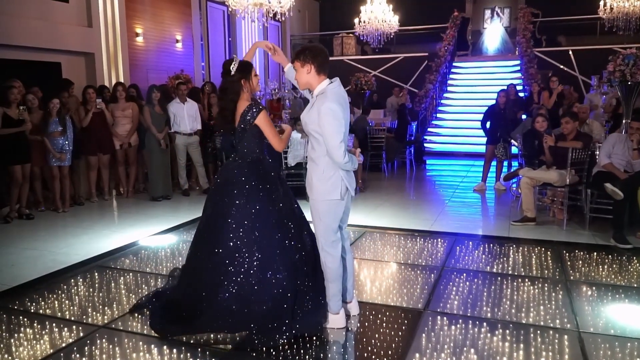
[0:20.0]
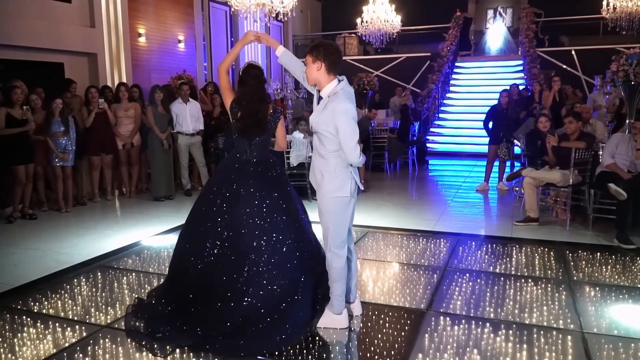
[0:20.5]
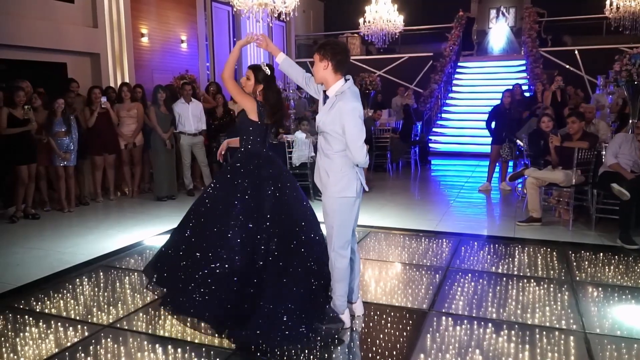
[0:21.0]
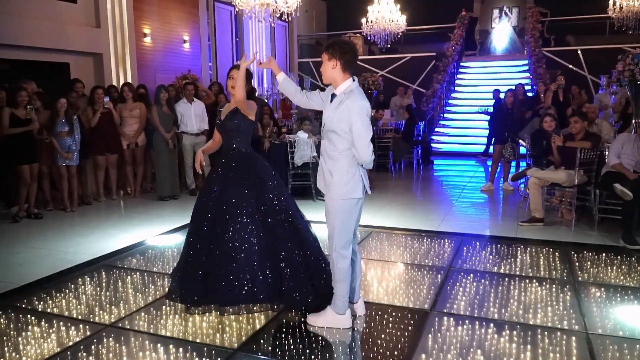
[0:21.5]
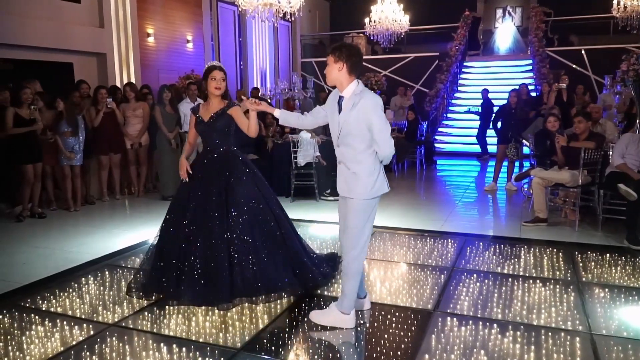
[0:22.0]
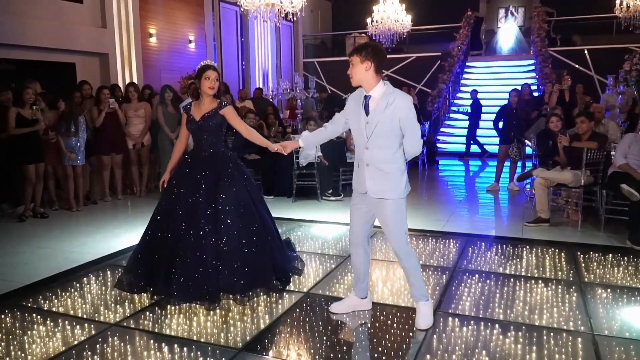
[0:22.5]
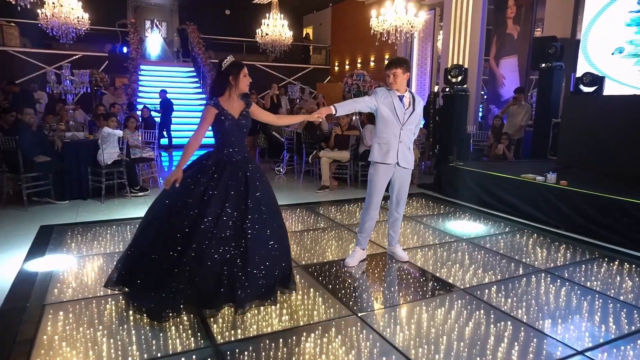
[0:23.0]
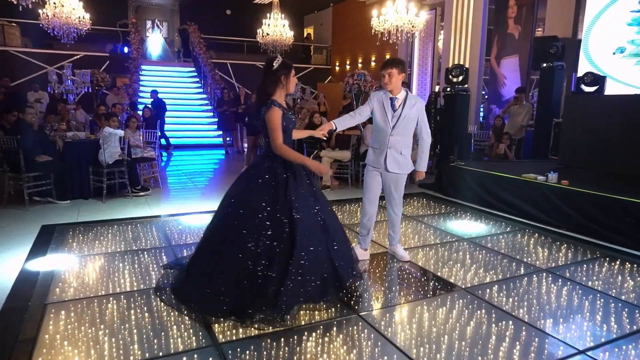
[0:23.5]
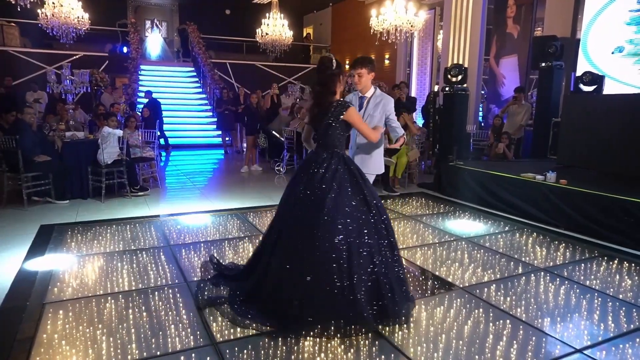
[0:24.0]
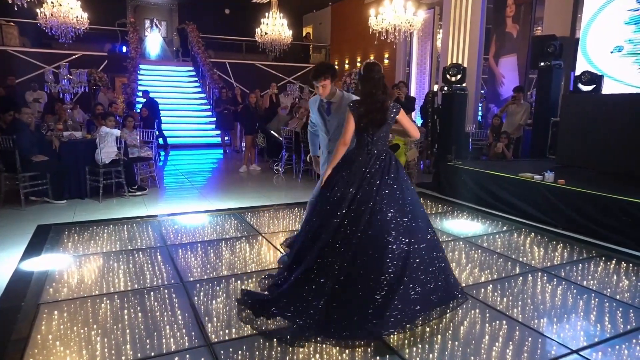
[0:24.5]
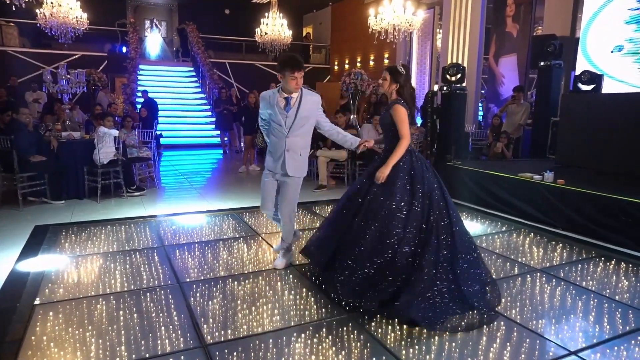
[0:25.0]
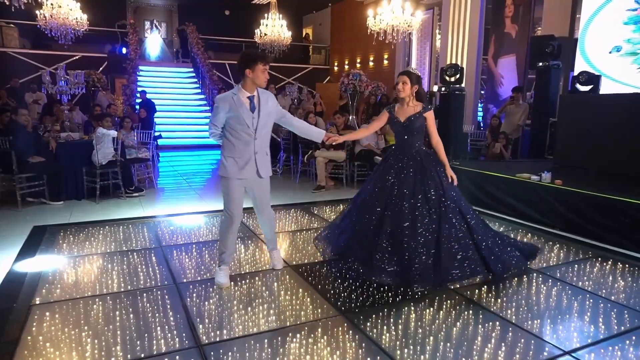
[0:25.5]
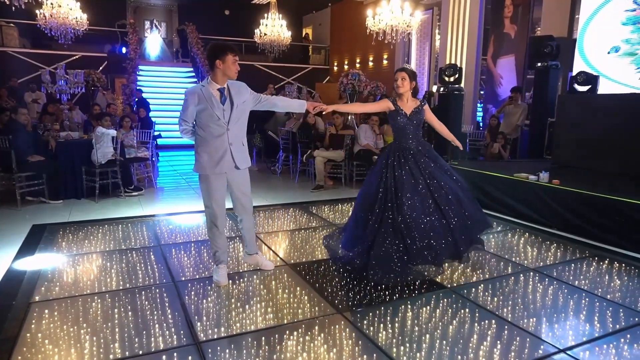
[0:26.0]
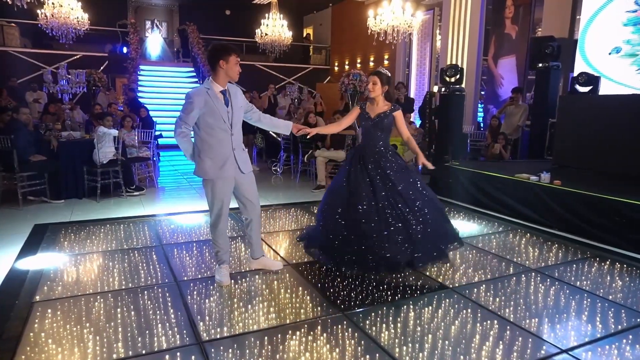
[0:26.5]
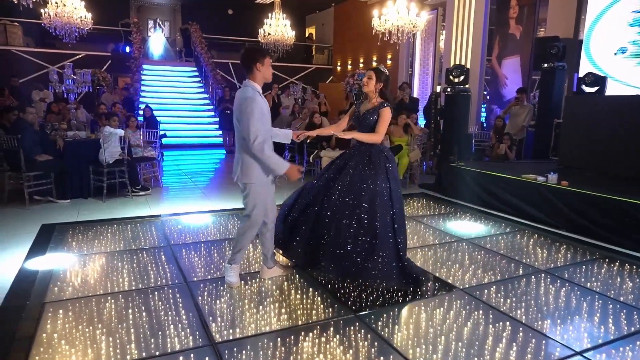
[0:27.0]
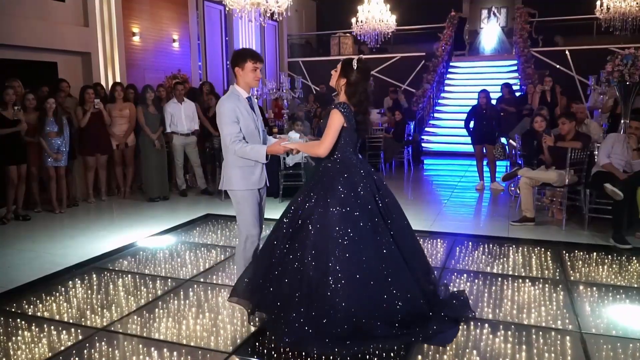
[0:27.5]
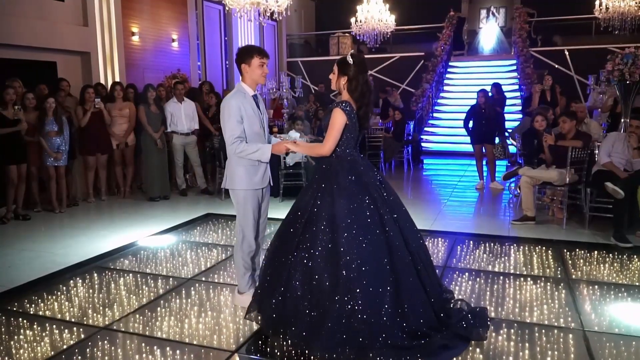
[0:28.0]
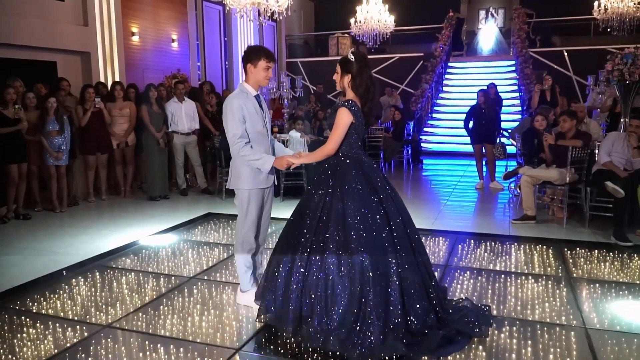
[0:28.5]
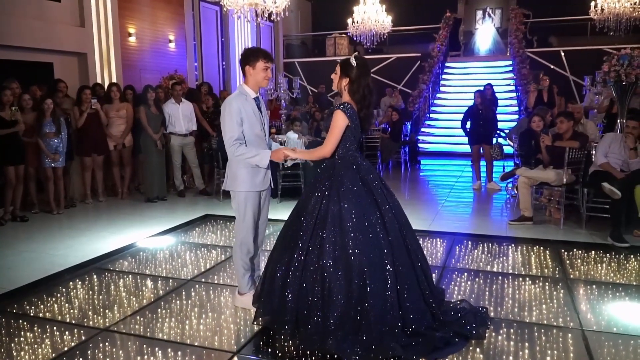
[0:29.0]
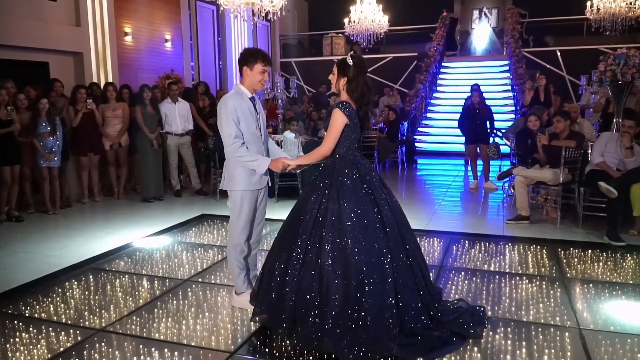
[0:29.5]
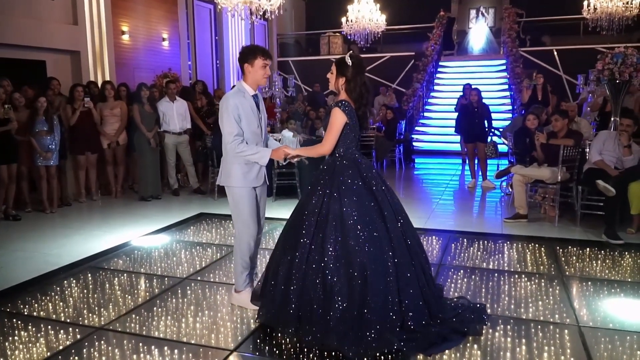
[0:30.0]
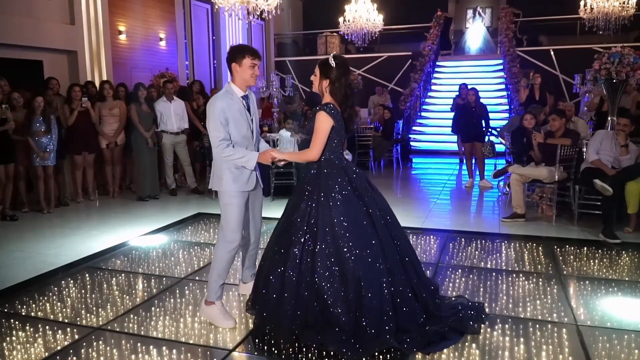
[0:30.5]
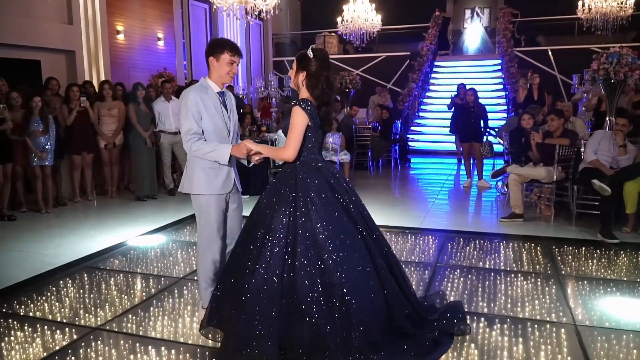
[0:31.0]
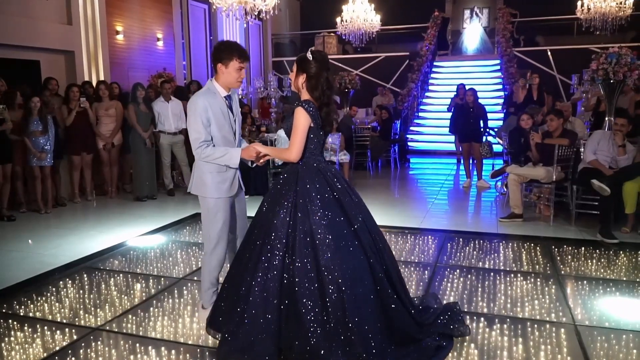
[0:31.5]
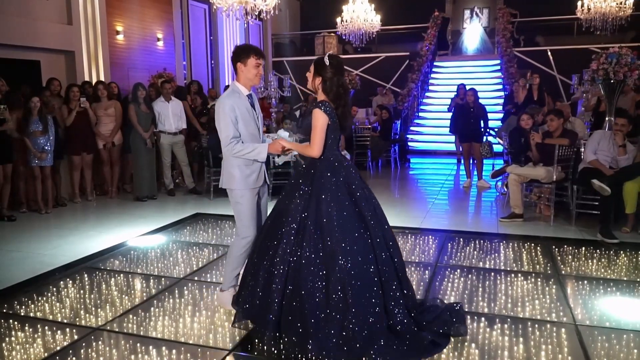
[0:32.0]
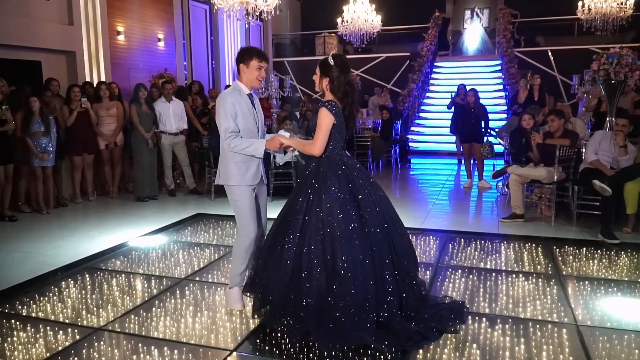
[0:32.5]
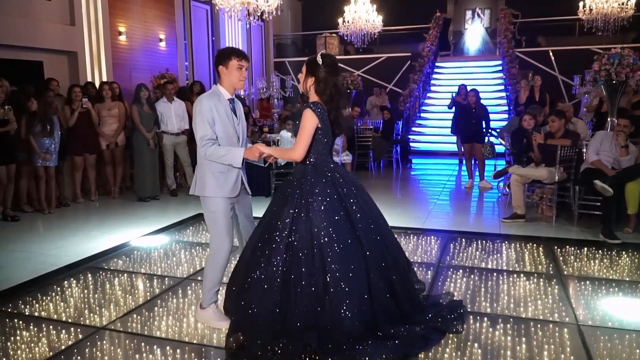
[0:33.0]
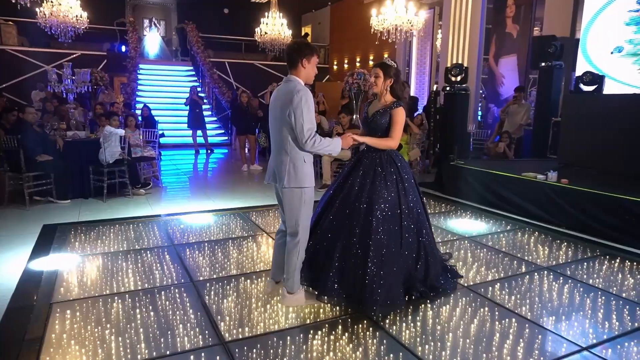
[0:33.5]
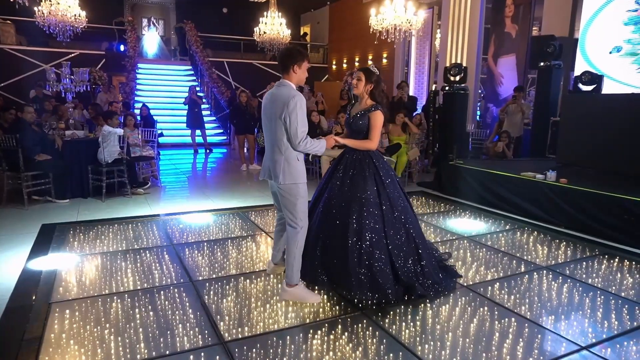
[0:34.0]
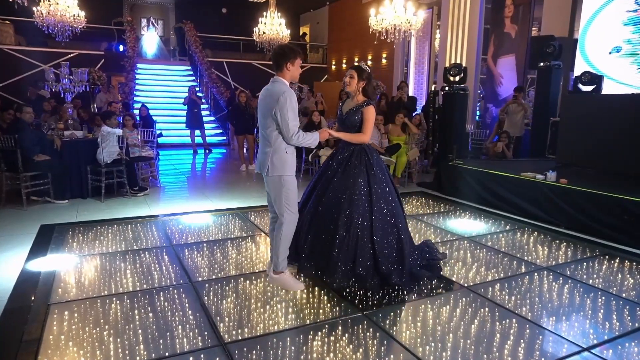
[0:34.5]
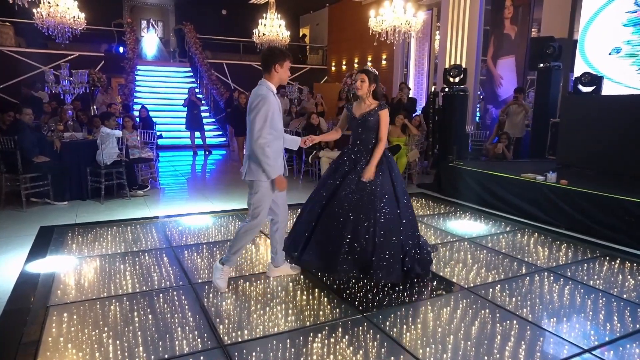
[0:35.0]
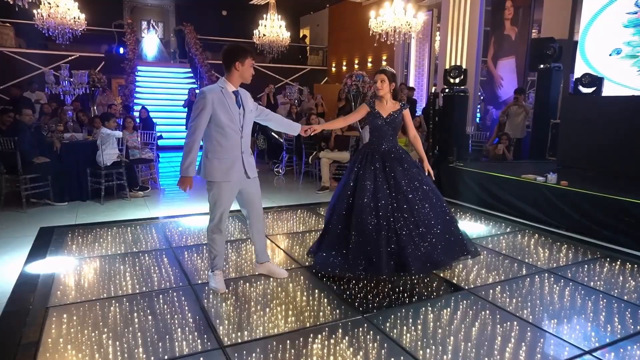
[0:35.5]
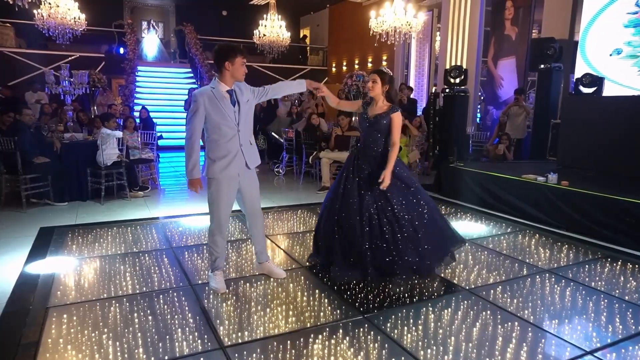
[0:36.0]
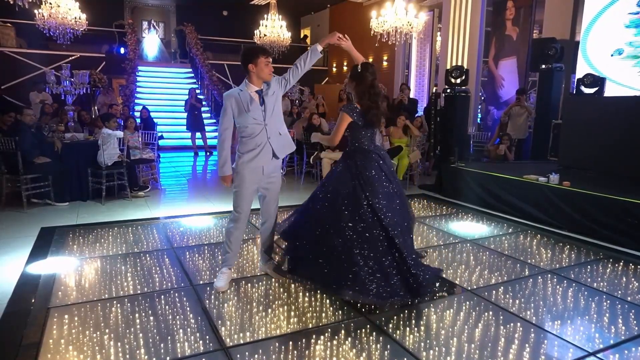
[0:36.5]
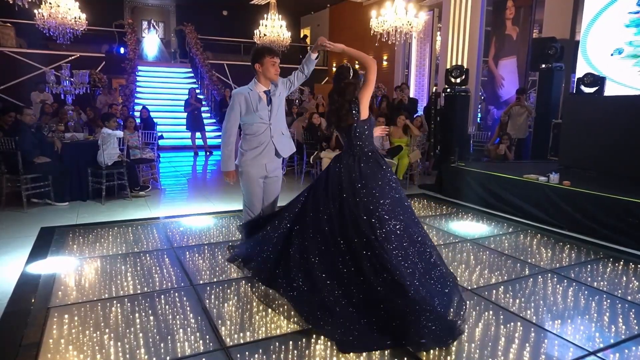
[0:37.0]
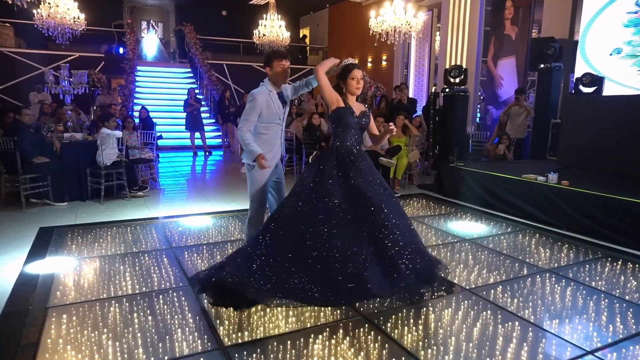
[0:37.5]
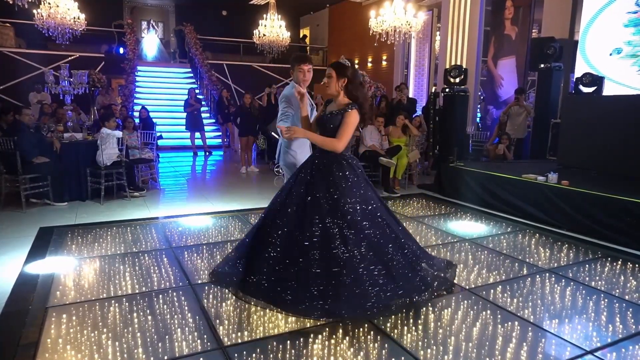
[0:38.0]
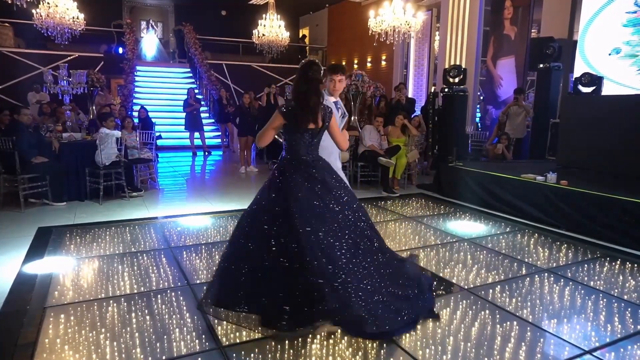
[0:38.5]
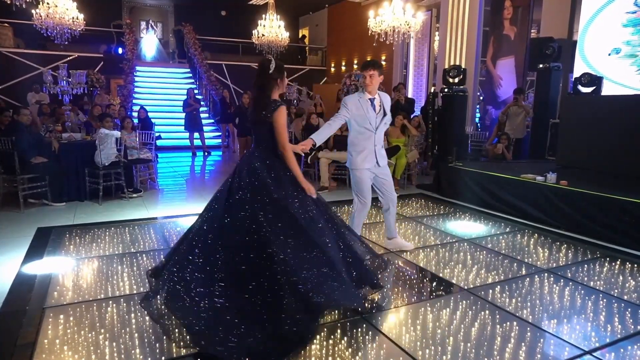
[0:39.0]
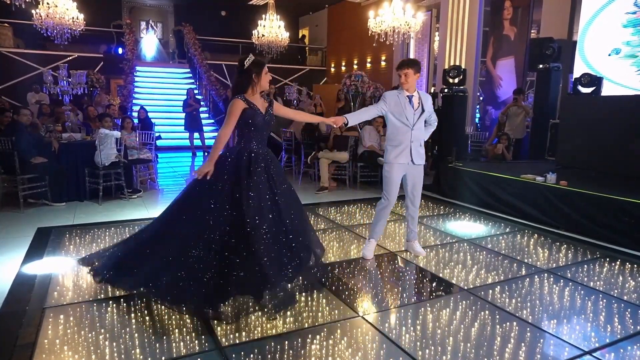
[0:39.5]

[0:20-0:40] The boy and the girl perform a slow, methodical dance routine on the stage that looks planned ahead of time, probably some type of traditional dance. The setting possibly looks like Spain or a Spanish-speaking area. The room is full of people, and the stage in the middle of the floor is lit up from underneath. On one side of the room people are sitting in chairs at tables, and on the other side people are standing, watching the two dance on the custom-made stage. There seem to be many young people in the room.